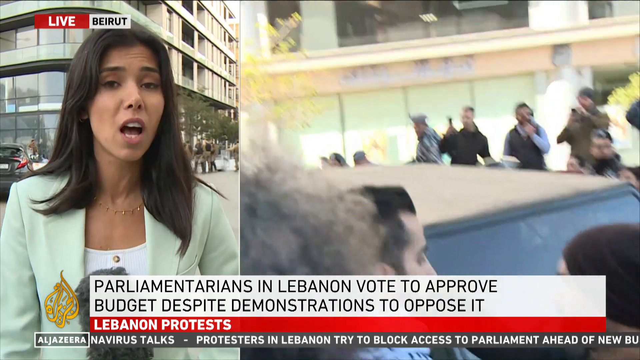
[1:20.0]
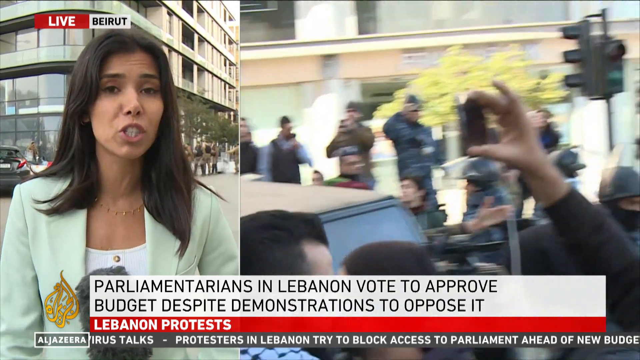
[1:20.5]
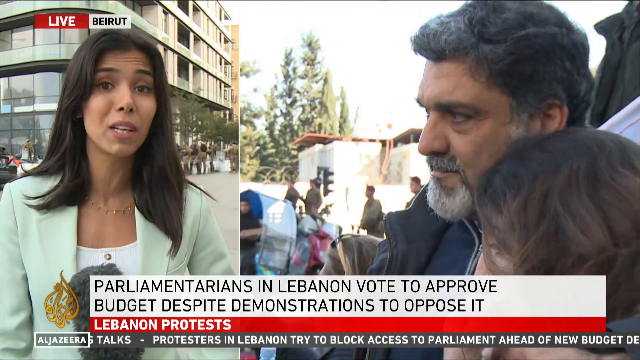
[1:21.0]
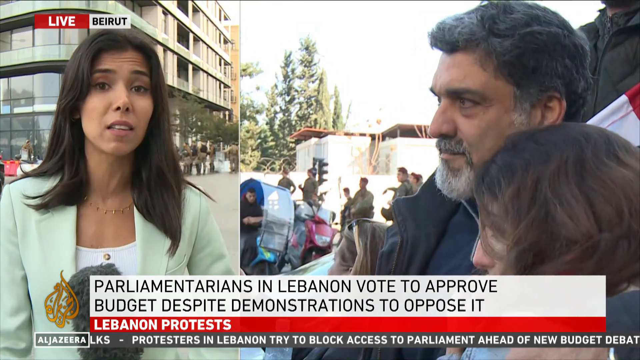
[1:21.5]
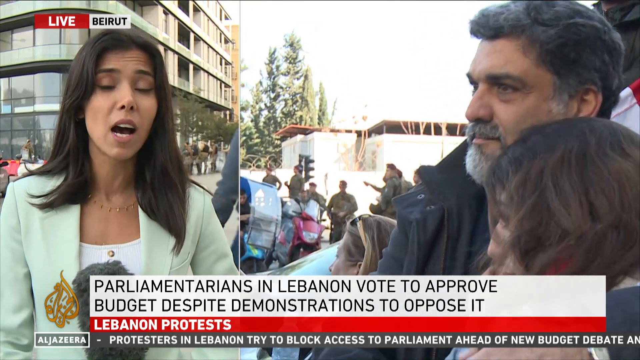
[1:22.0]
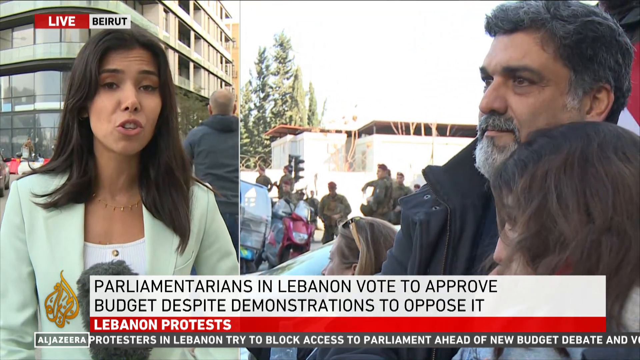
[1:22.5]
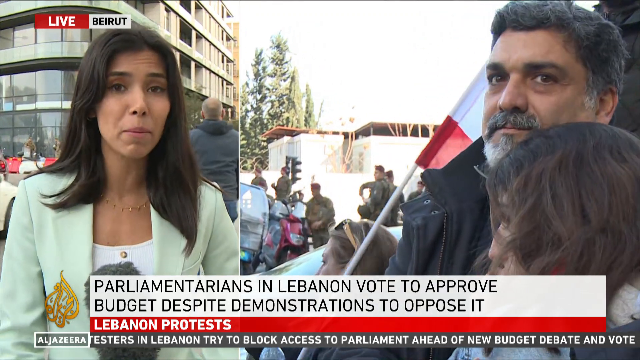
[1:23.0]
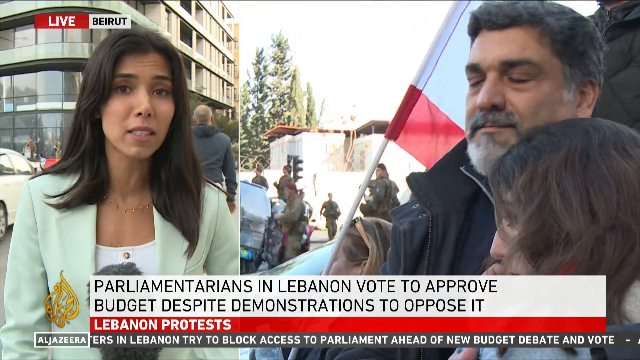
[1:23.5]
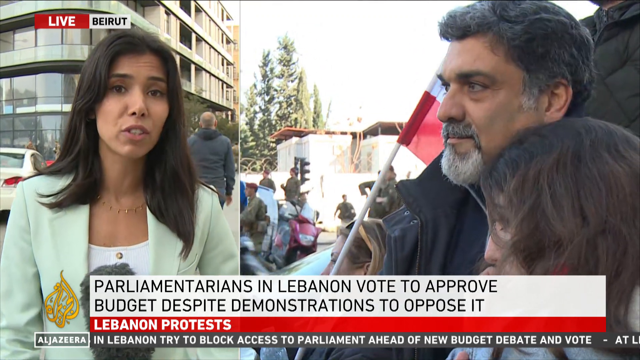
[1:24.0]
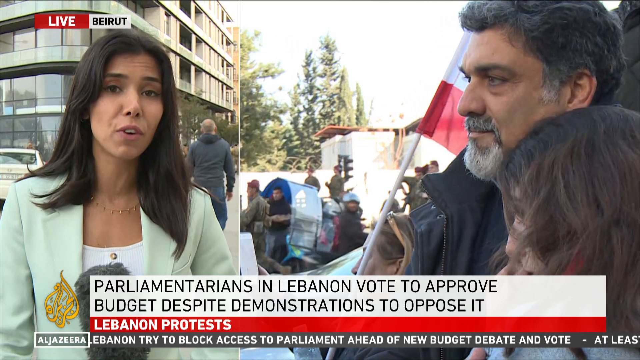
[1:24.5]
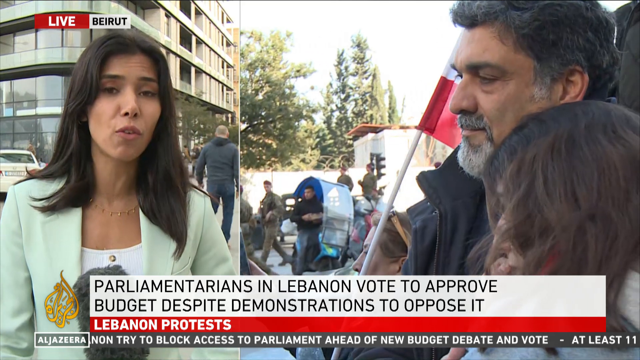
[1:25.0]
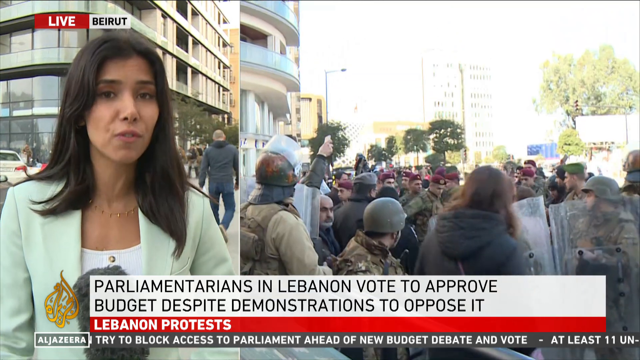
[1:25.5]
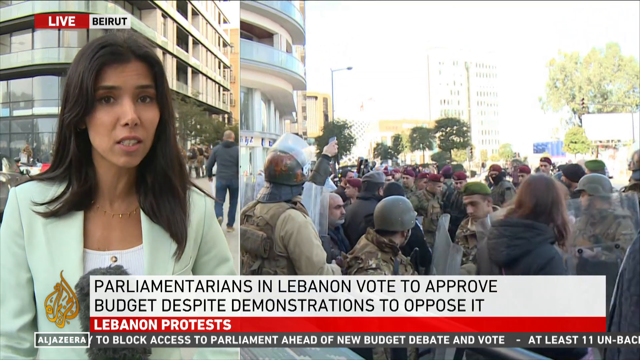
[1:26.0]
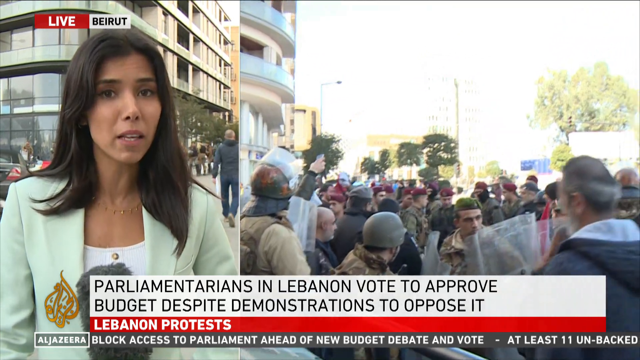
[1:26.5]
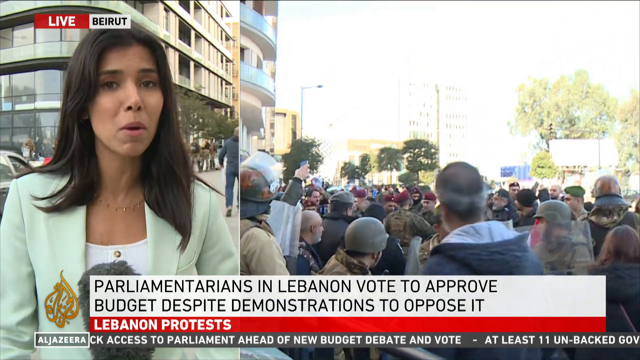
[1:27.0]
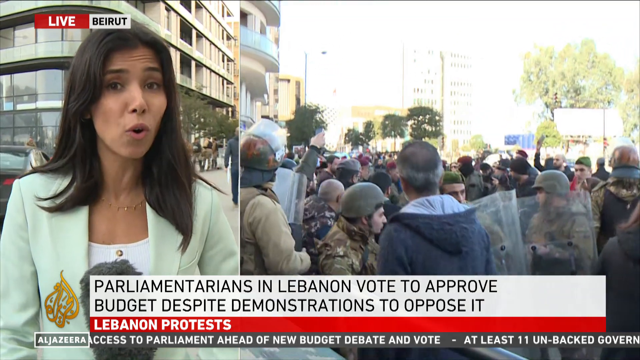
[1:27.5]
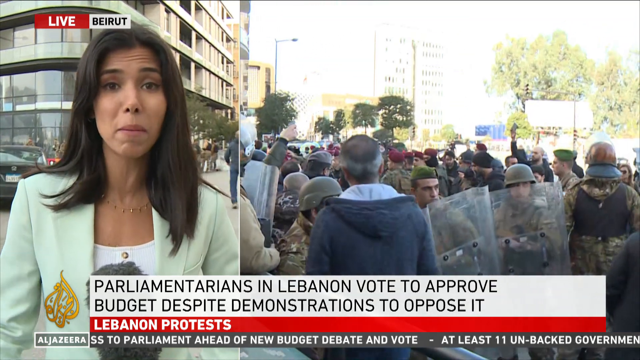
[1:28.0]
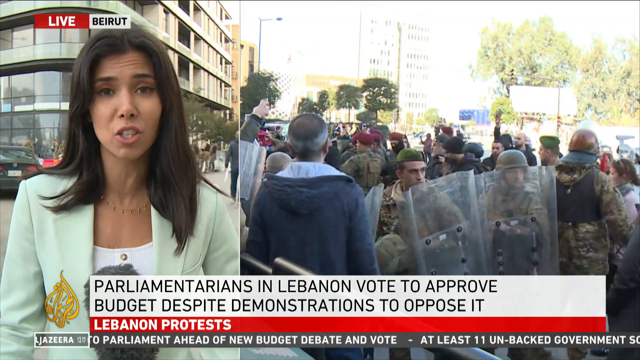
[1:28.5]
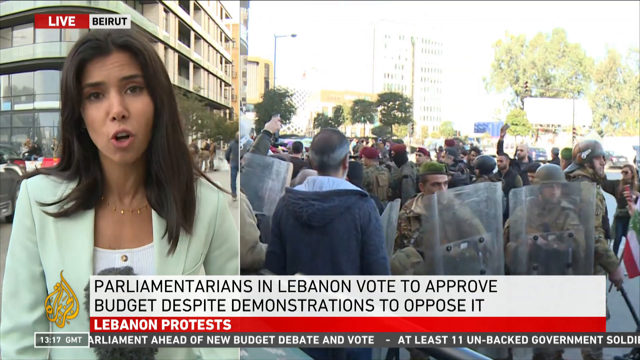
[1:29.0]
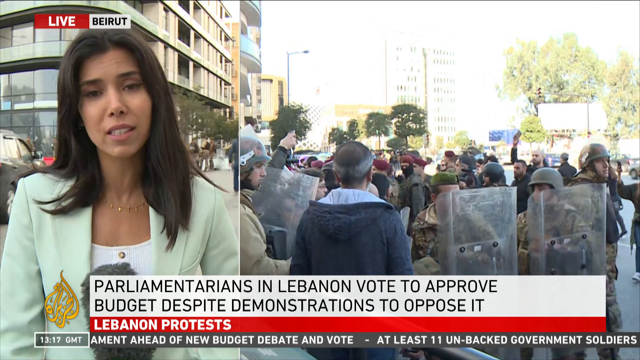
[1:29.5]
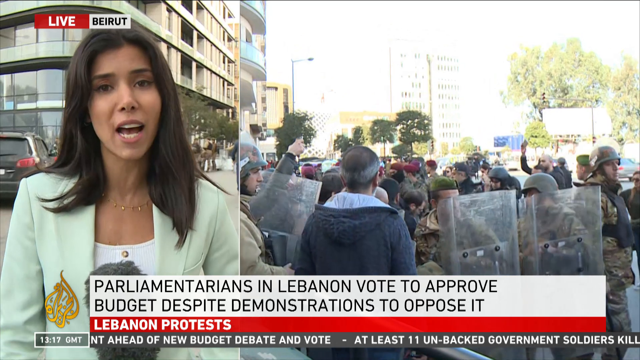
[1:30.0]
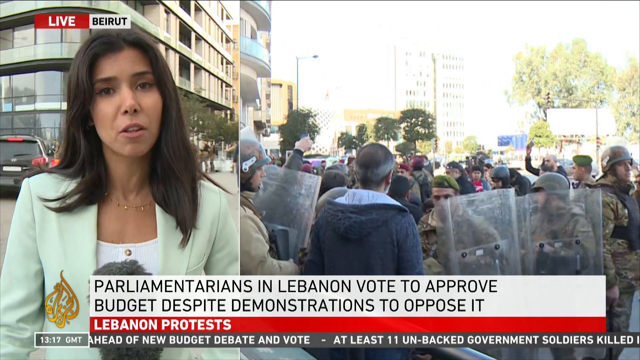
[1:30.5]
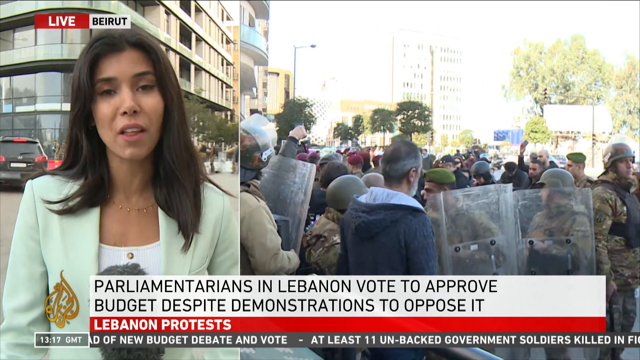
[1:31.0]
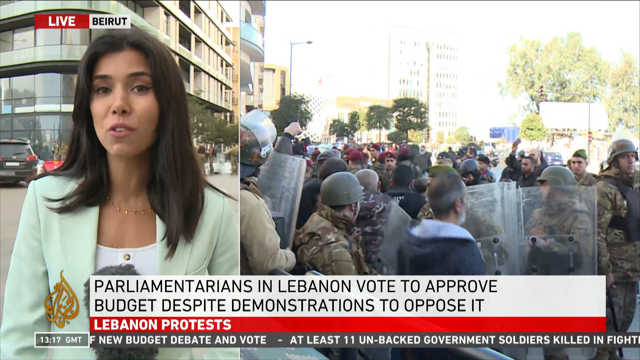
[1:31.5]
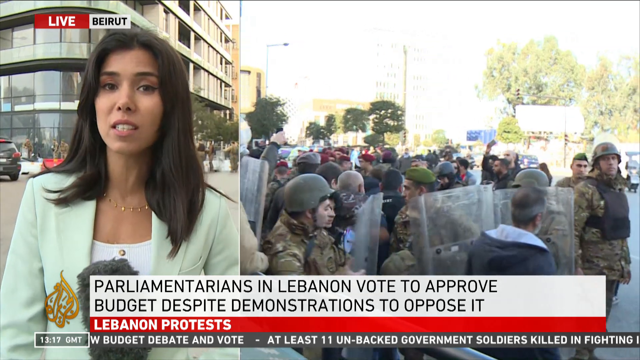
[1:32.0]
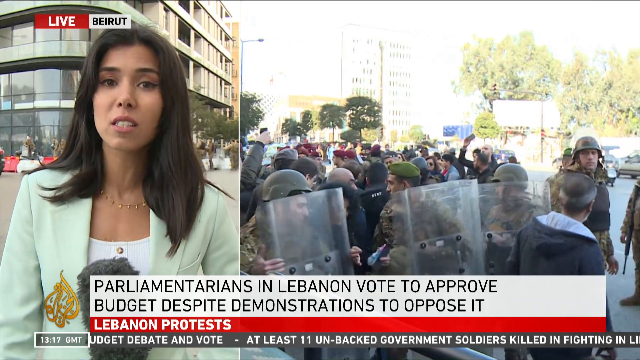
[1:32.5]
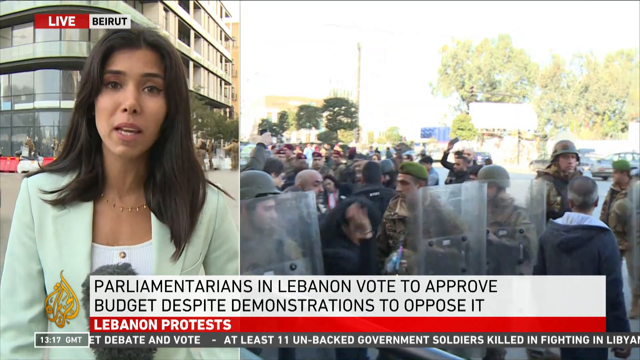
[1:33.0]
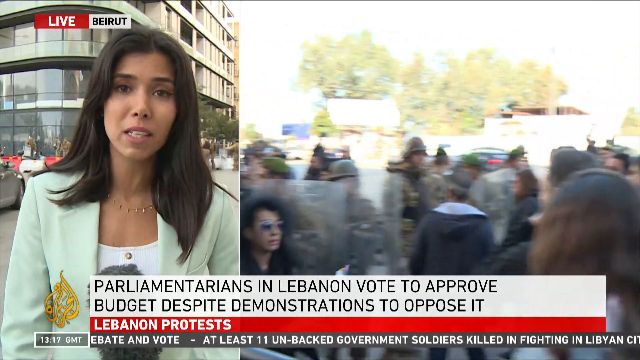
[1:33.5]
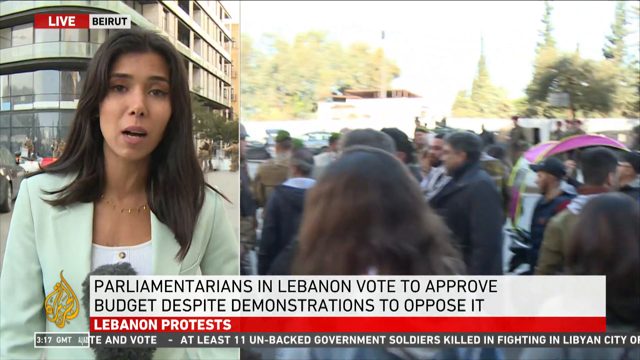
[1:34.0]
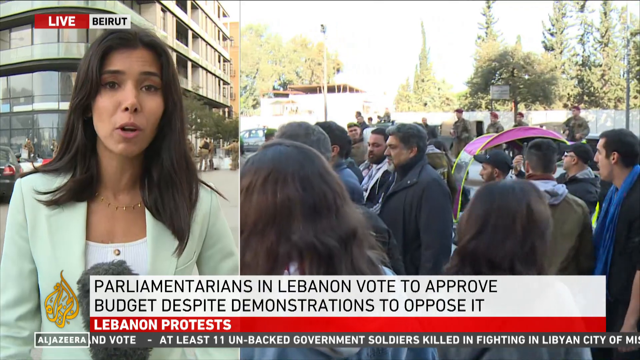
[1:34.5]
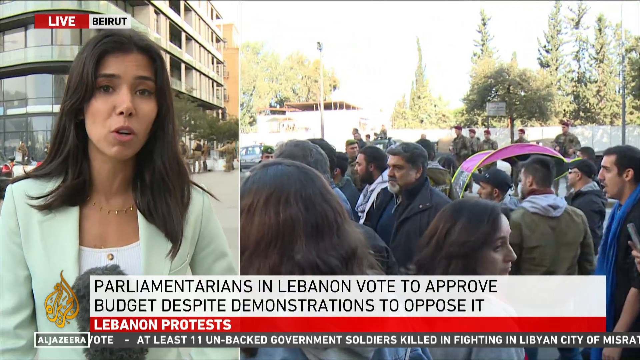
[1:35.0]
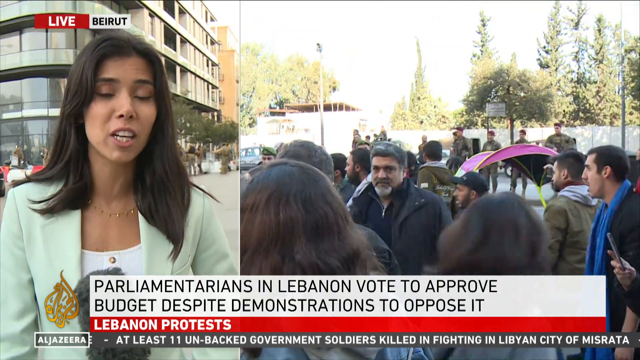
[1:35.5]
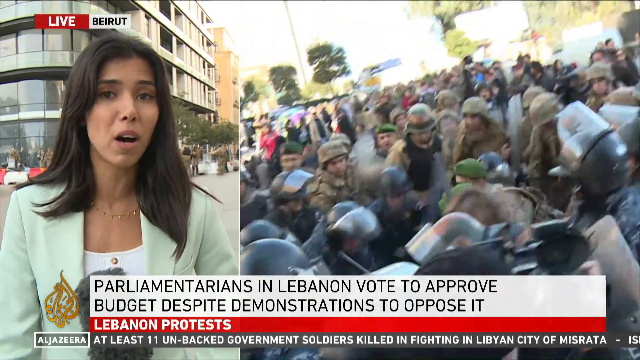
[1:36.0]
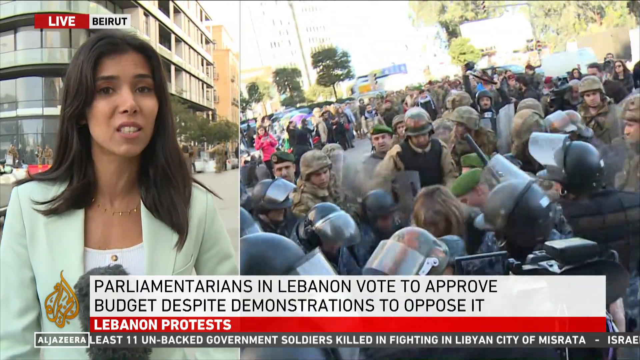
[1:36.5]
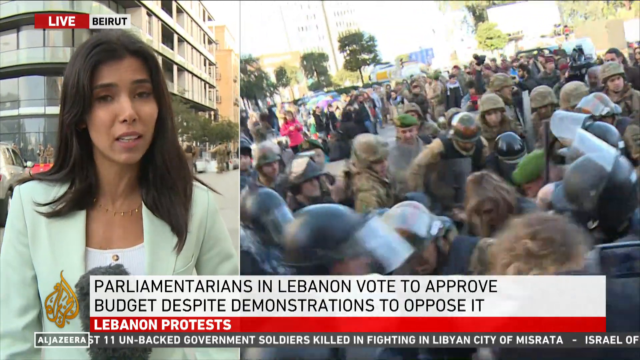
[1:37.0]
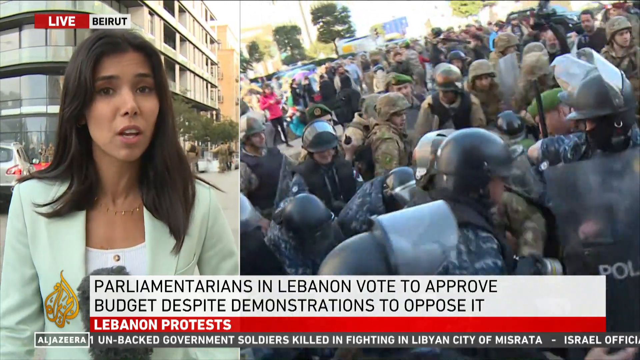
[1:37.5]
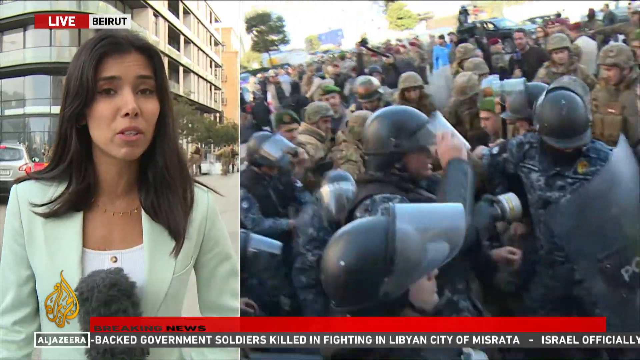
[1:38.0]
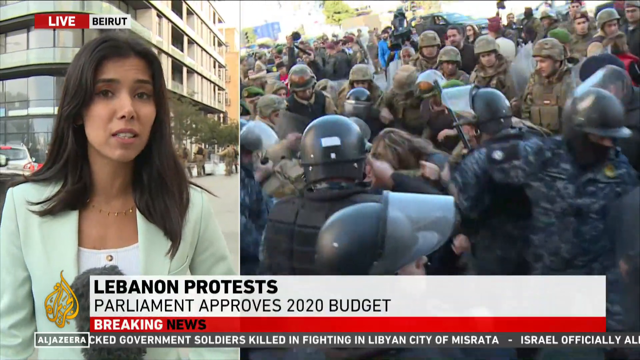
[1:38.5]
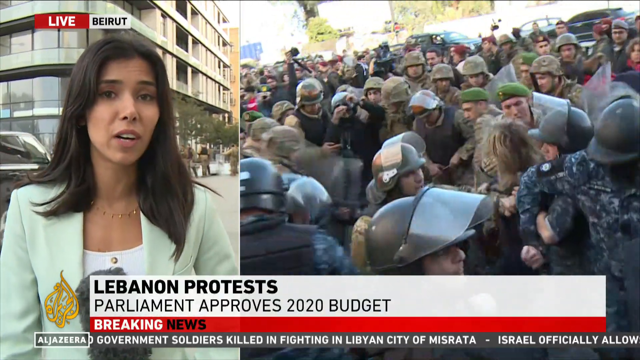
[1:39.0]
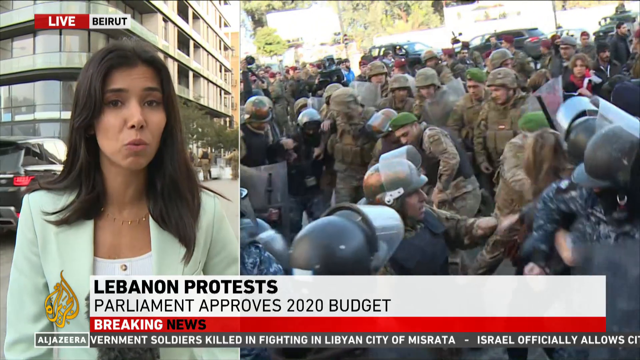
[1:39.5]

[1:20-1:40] The reporter is shown again with the split screen. Police officers stand around holding riot shields as protesters cut through, and in a chaotic scene police officers try to remove or move a protester. A close-up shows a protester who is holding a flag, standing and looking. Protesters and police officers stand around. A protester breaks through the barricade set up by the police officers, pushes them out of the way and walks through. Many people are holding flags, people are taking pictures, and videographers are present. The reporter continues reporting in the split screen over the protest footage.